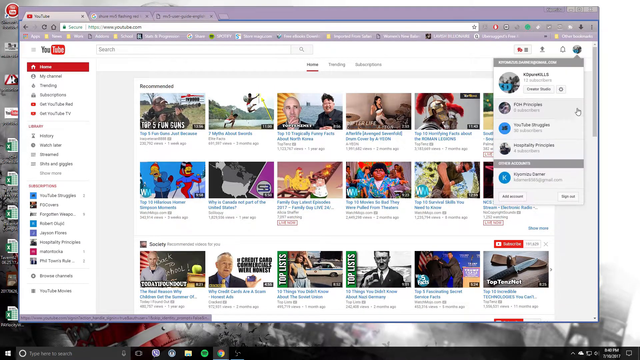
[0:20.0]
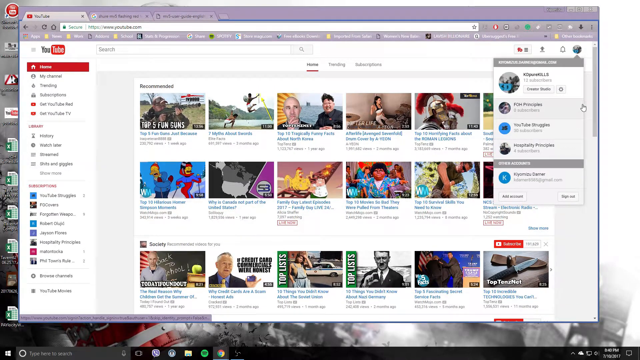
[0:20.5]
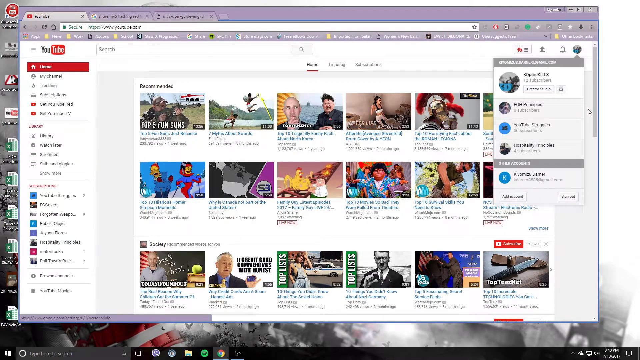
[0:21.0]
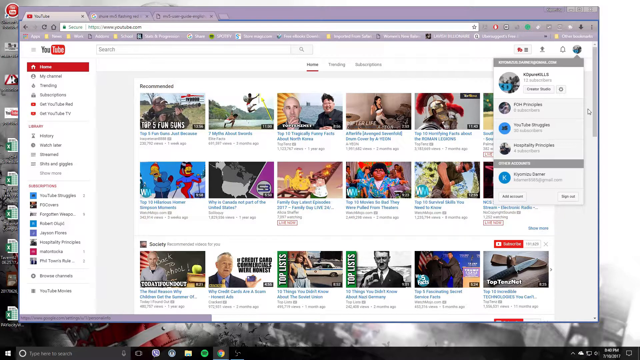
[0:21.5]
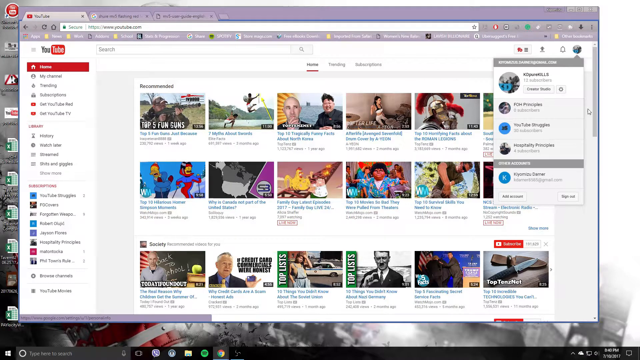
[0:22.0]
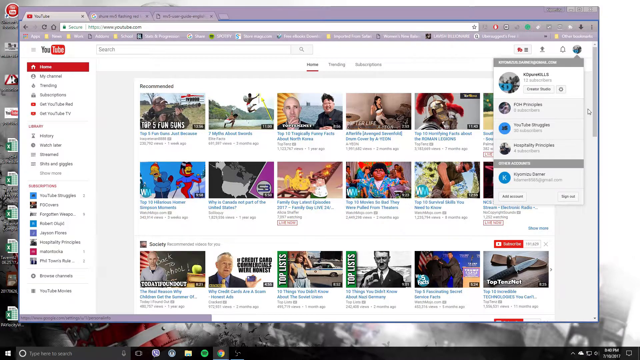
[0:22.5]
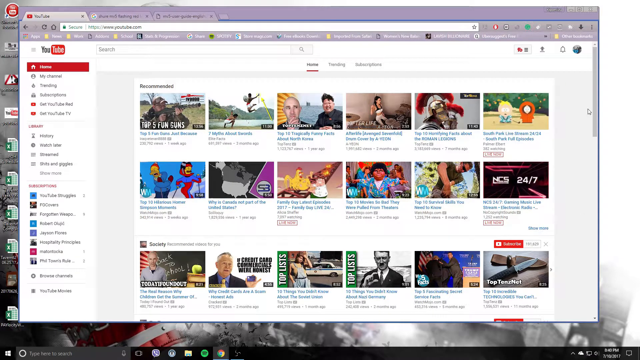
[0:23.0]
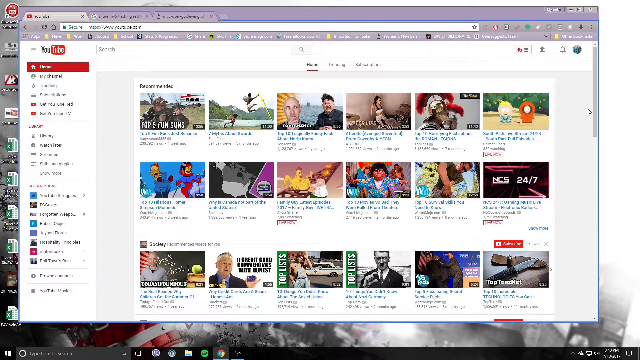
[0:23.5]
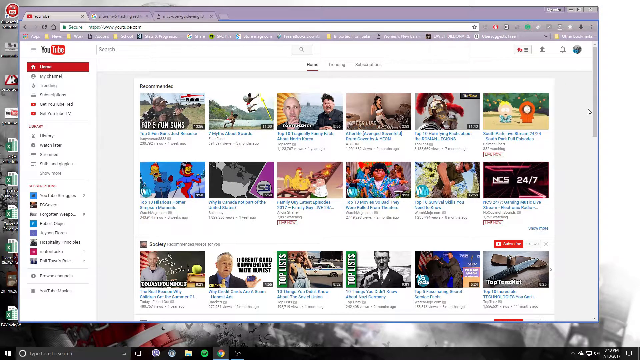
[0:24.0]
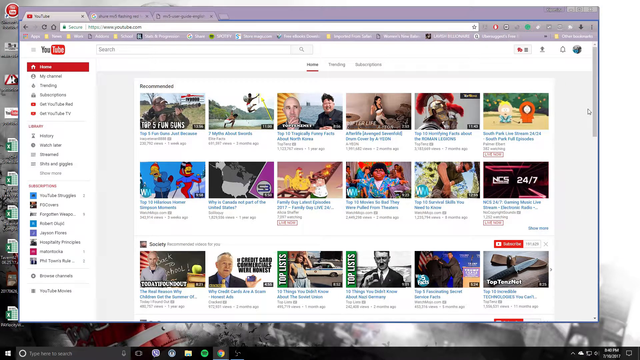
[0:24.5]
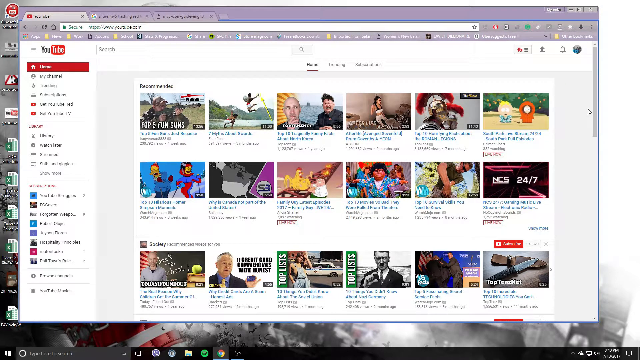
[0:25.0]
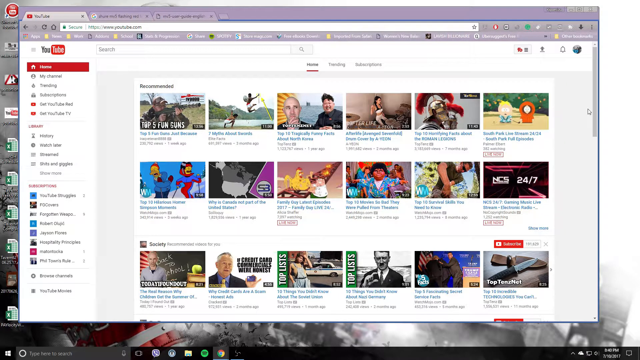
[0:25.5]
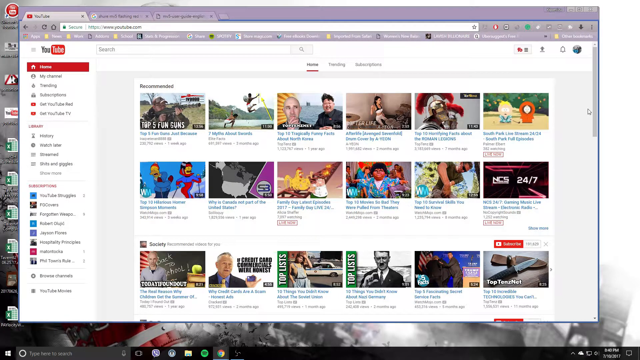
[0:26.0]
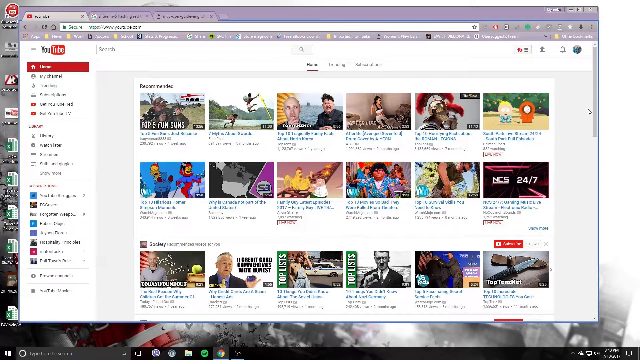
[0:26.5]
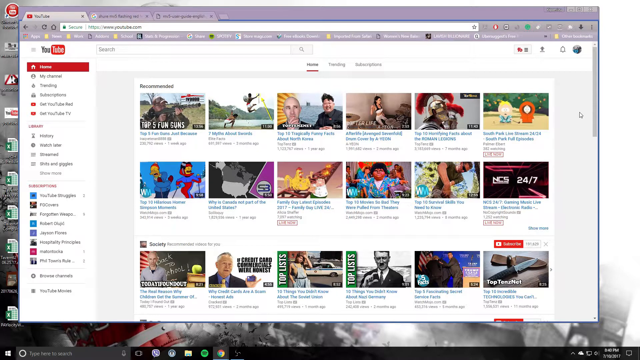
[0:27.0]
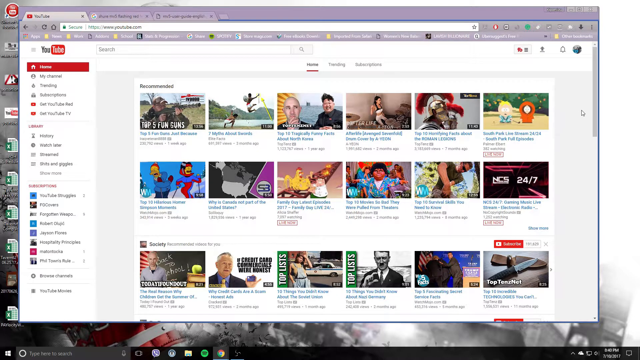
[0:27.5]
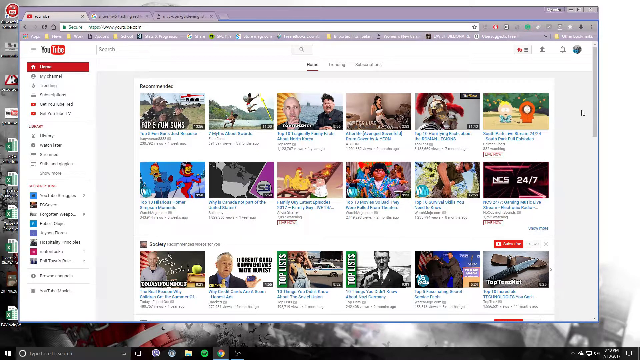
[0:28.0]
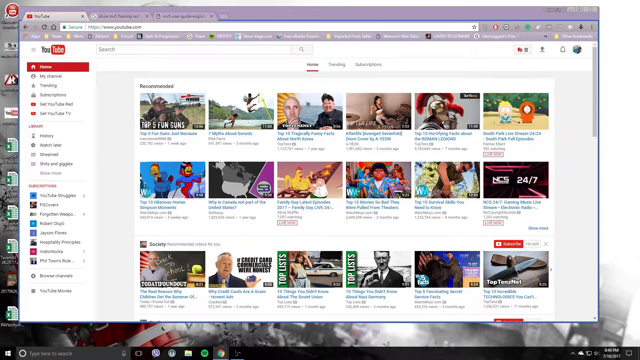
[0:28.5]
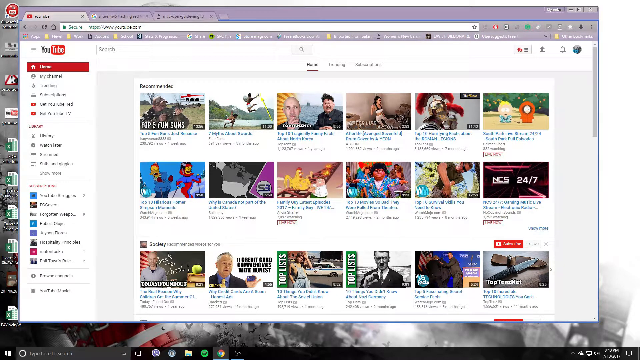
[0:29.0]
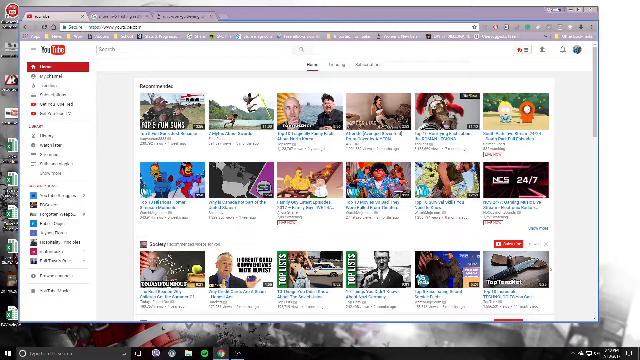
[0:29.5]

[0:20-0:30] A YouTube page is shown with a white background and tabs visible at the top. The menu on the left side includes Library and Subscriptions. The search bar is blank. Video title clips fill the page, and the cursor is on the person's personal page, apparently their own screen. The cursor moves around a bit while the page stays still, not scrolling at all. The cursor goes back to the person's name in the upper right corner, stops moving, and then deselects it.